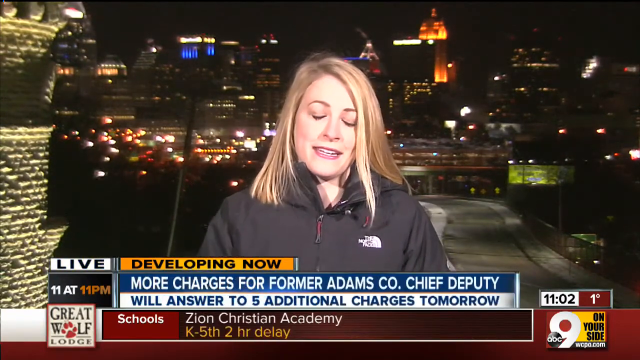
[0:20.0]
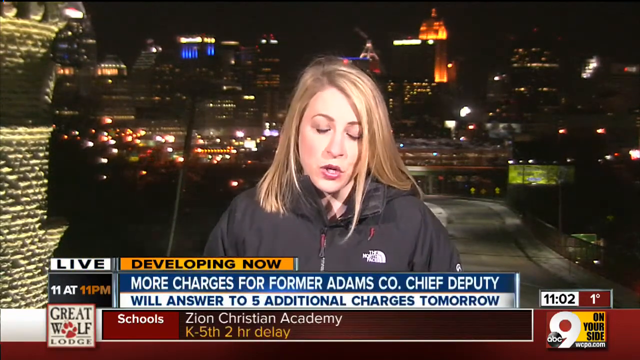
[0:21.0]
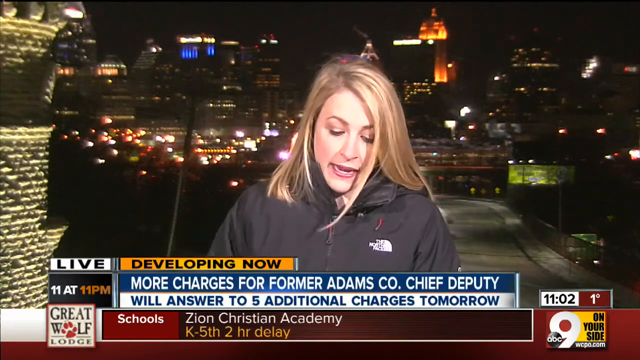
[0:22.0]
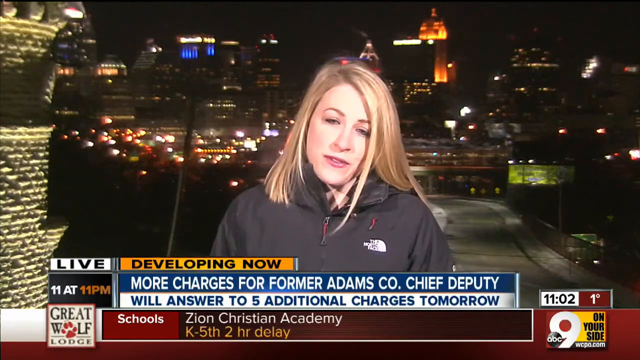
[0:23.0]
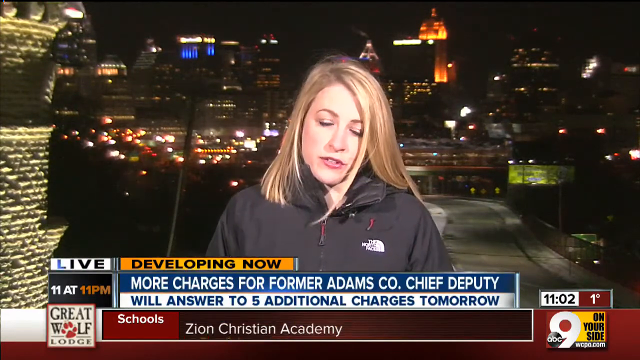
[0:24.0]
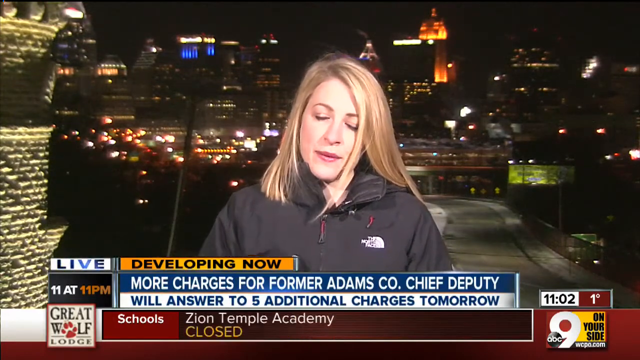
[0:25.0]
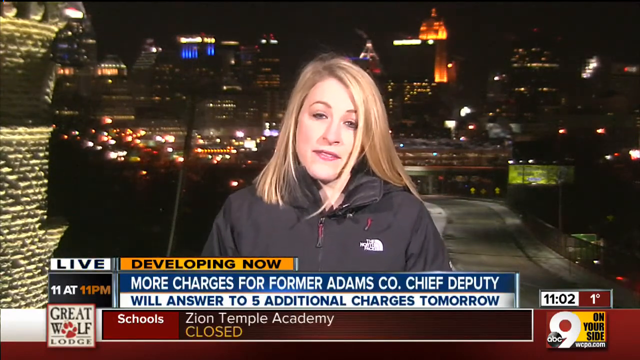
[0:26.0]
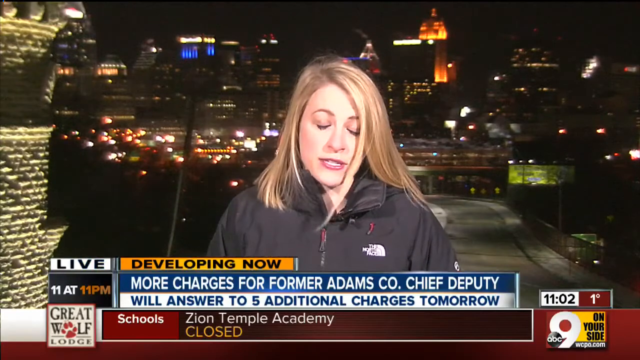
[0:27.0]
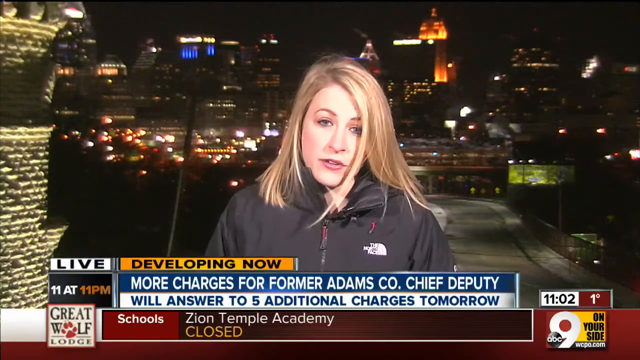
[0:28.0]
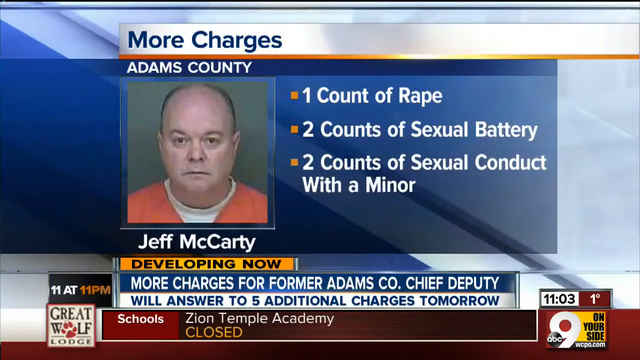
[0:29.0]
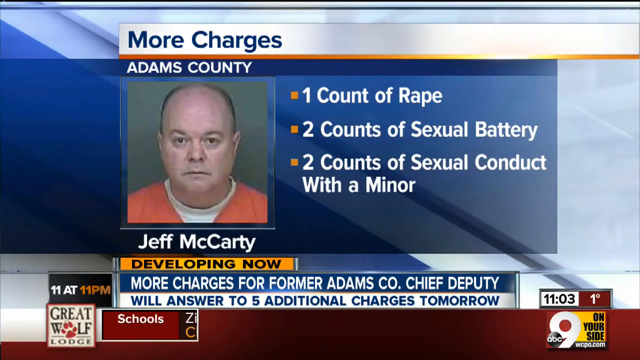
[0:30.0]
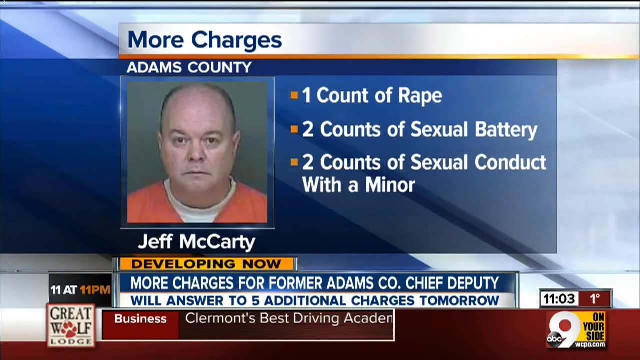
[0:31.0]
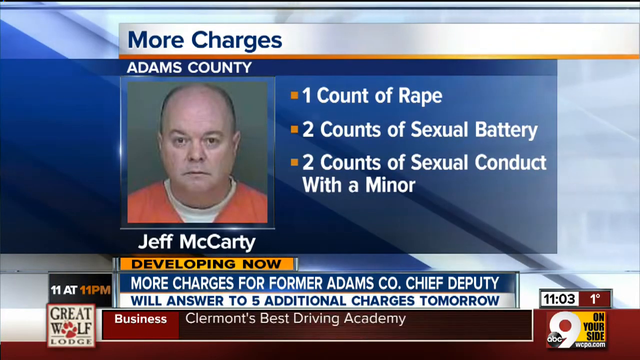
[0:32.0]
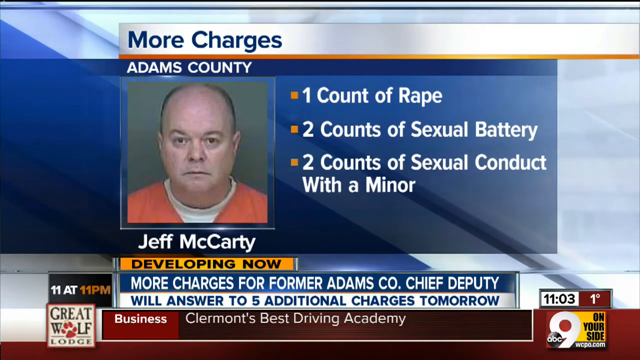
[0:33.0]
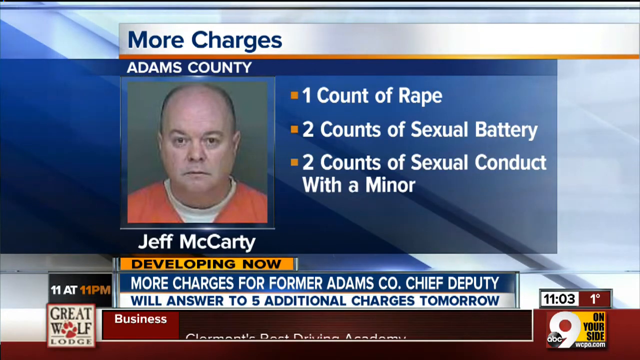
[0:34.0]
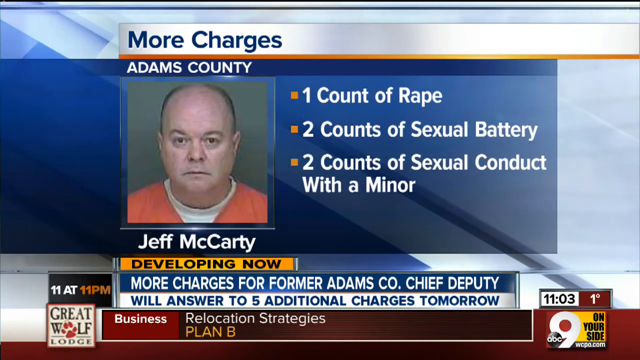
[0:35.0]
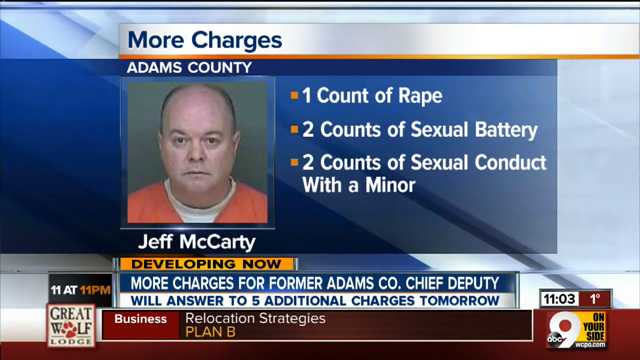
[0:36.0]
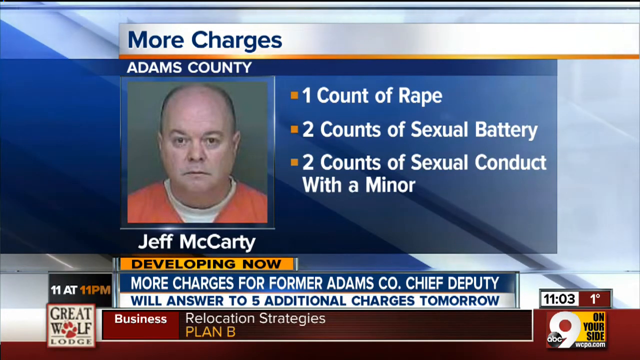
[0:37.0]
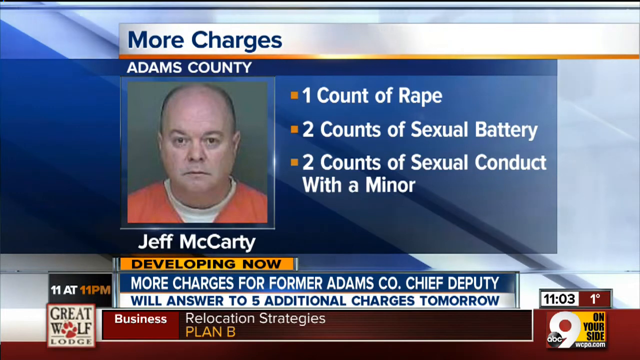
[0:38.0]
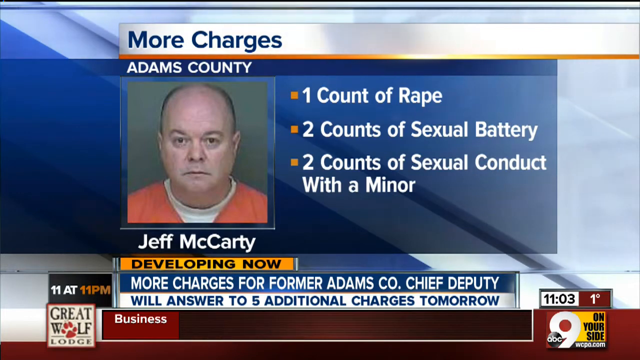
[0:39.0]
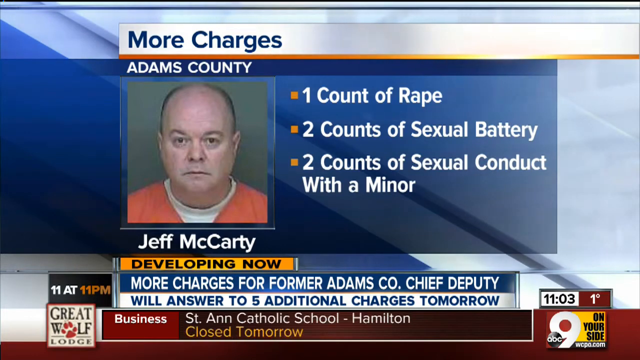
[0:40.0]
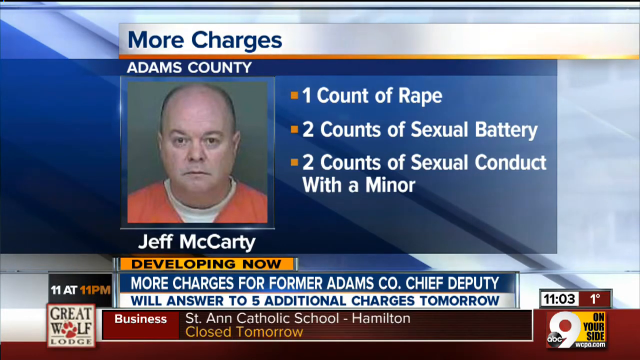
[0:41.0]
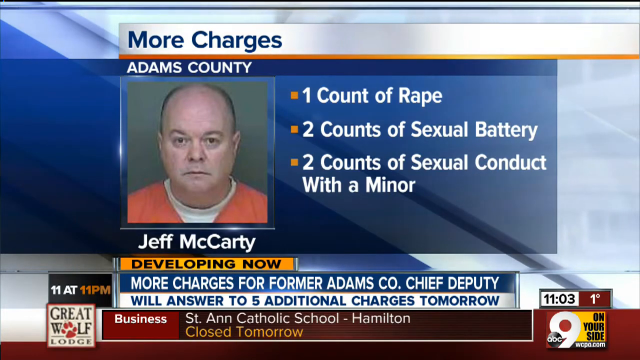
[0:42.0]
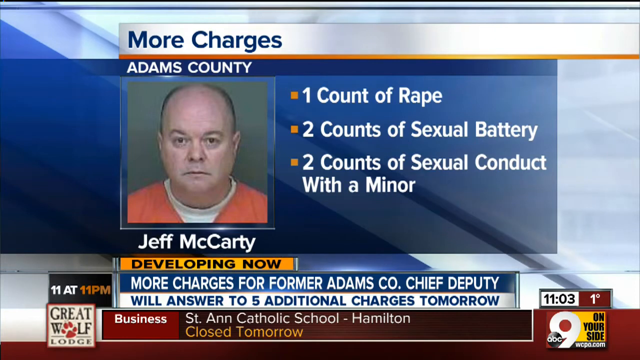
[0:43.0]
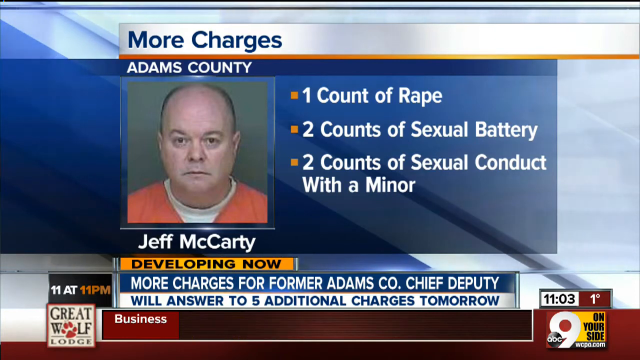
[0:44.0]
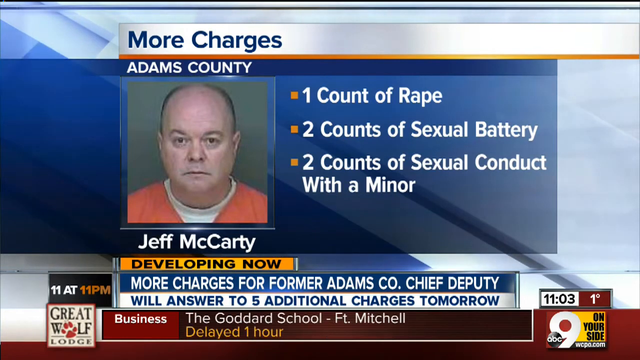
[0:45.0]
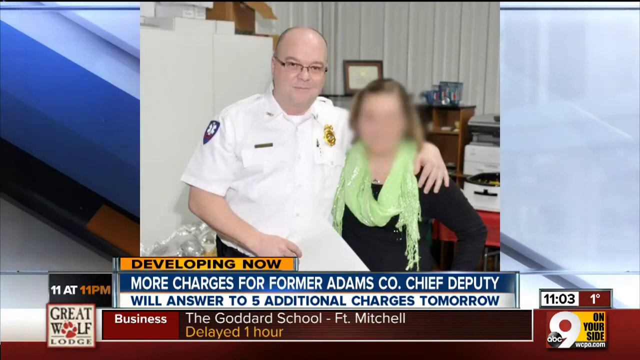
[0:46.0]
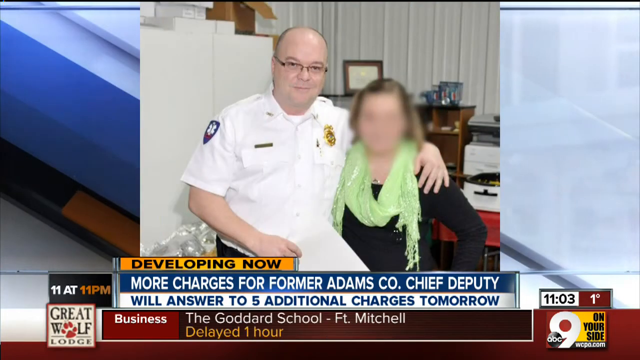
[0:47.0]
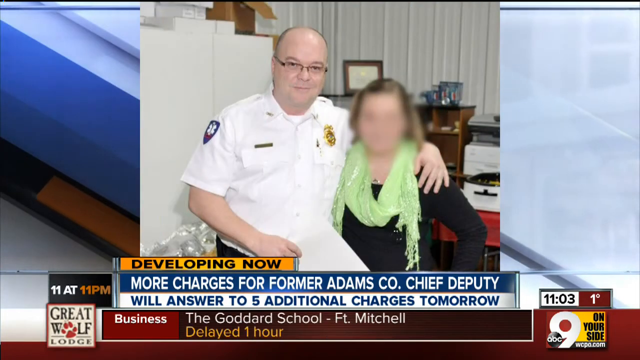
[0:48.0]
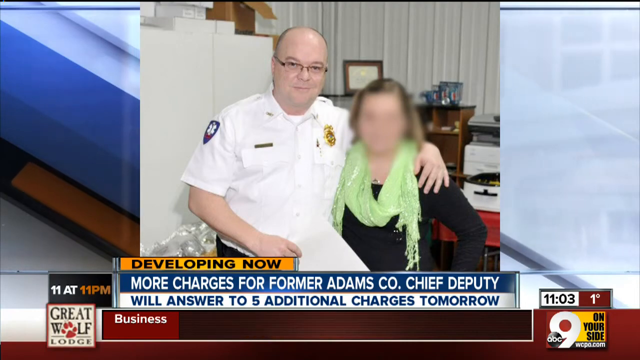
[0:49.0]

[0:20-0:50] The "developing now" banner continues, saying the former chief deputy "will answer to five additional charges tomorrow." The closings ticker shows "Zion Christian Academy" with a two-hour delay. Behind the reporter with blonde hair there is a city. A list of more charges appears for Adams County: one count of rape, two counts of sexual battery, and two counts of sexual contact with a minor. A man identified as Jeff McCarthy is shown, and he was a chief of police. A picture shows him with a woman. At the bottom, more closings appear, including "St. Anne's Catholic School, Hamilton, is closed tomorrow," "The Goddard School," and "Westchester Christian Child Care, delayed 19 minutes."